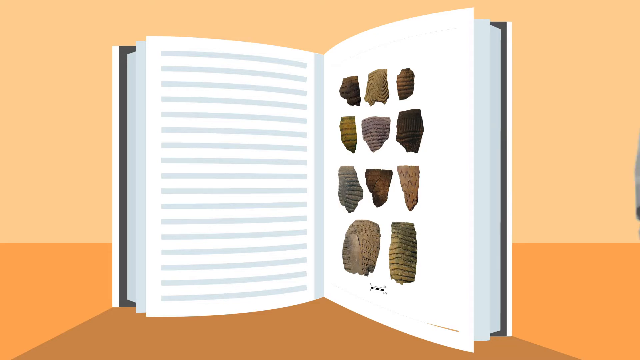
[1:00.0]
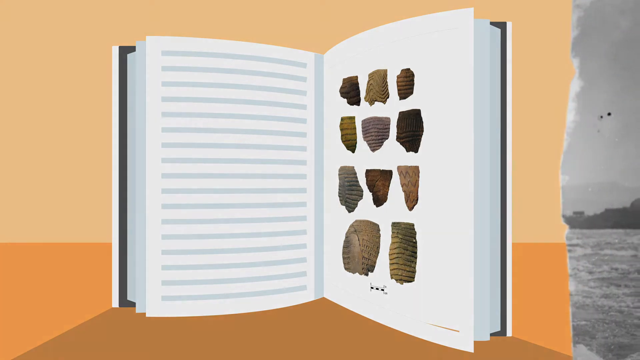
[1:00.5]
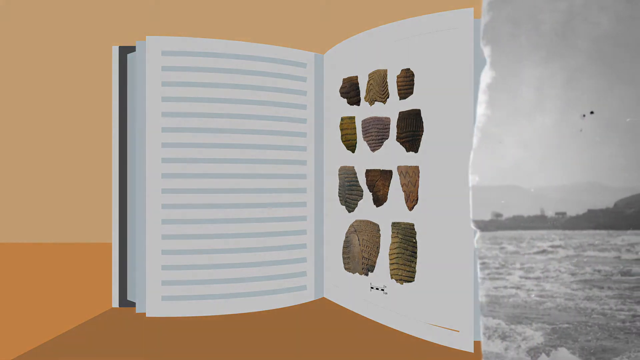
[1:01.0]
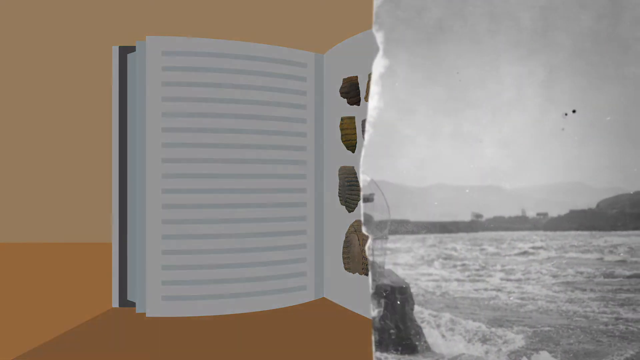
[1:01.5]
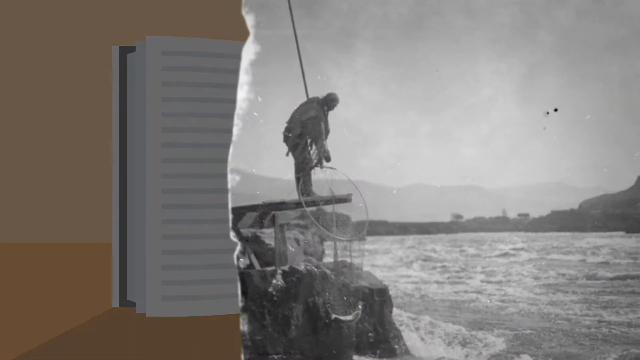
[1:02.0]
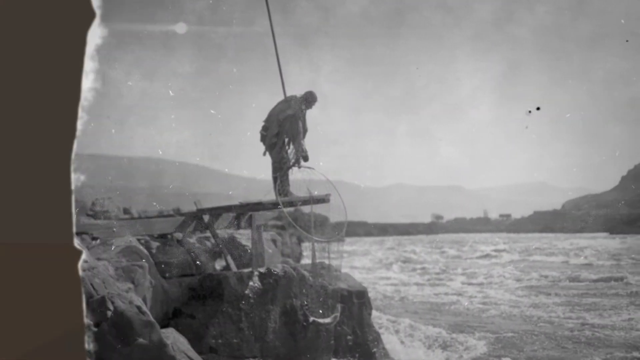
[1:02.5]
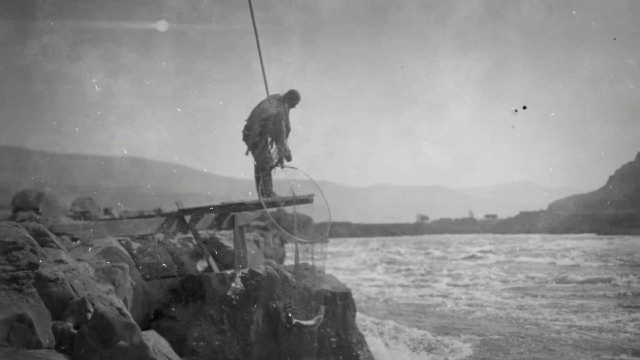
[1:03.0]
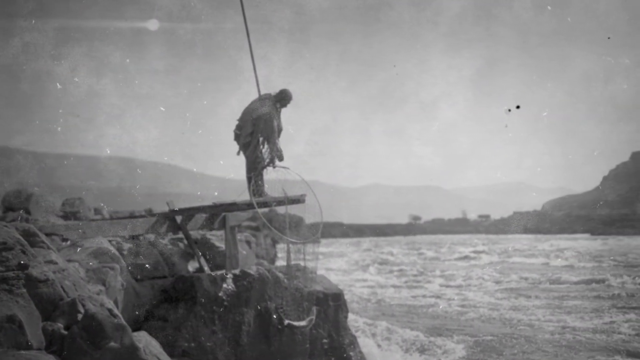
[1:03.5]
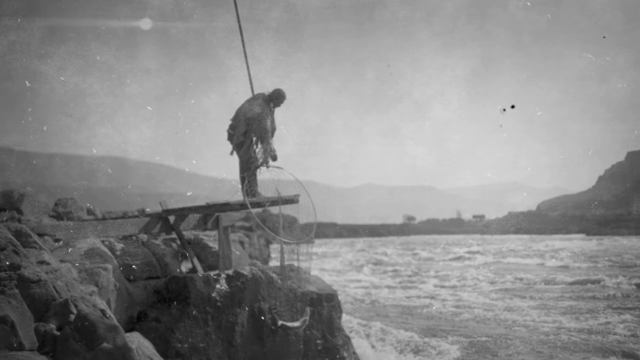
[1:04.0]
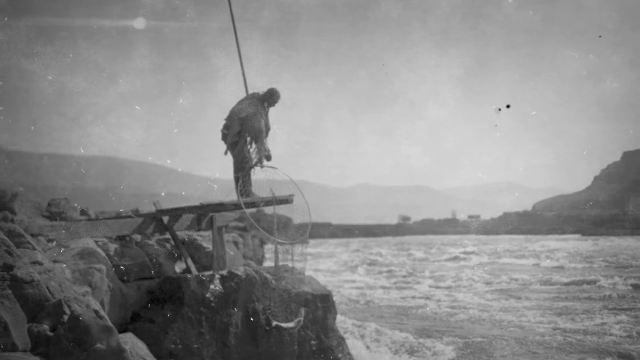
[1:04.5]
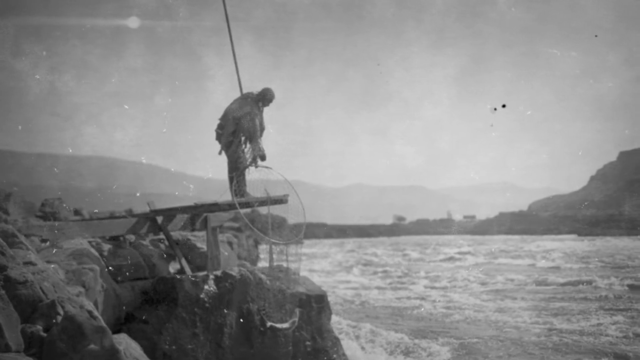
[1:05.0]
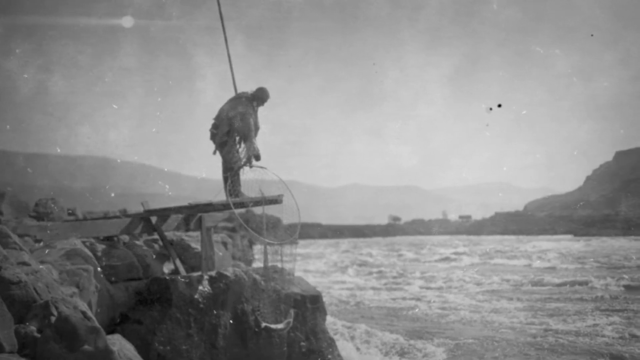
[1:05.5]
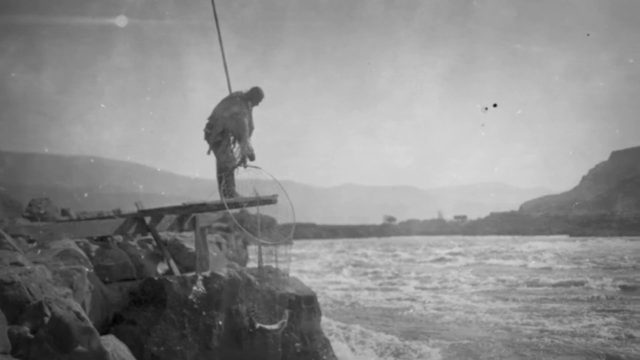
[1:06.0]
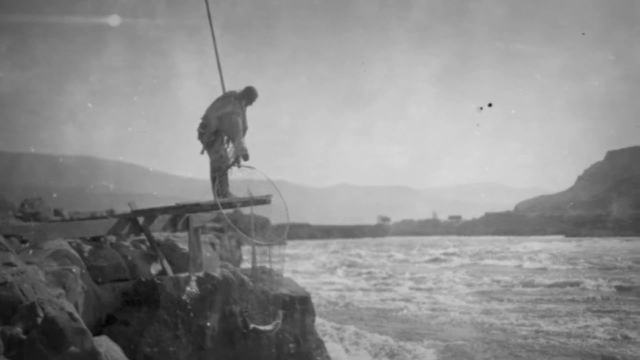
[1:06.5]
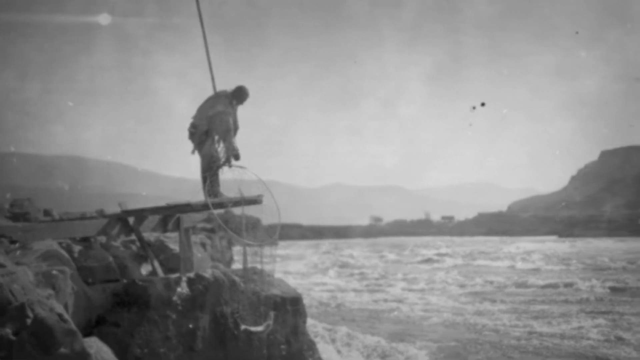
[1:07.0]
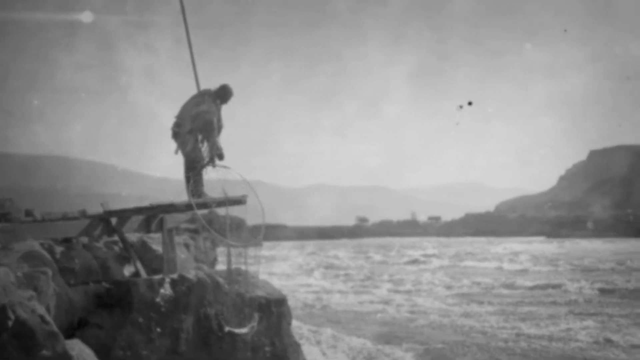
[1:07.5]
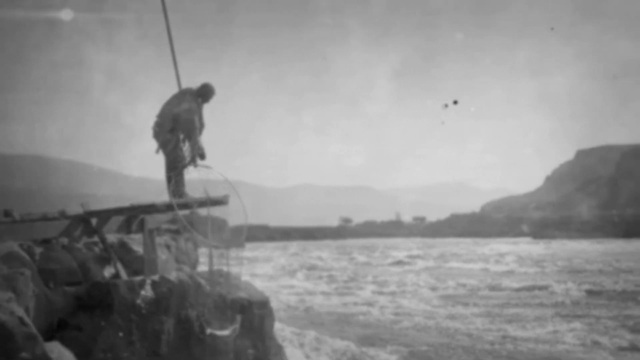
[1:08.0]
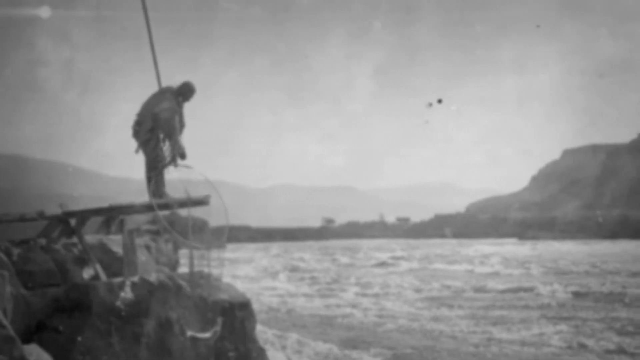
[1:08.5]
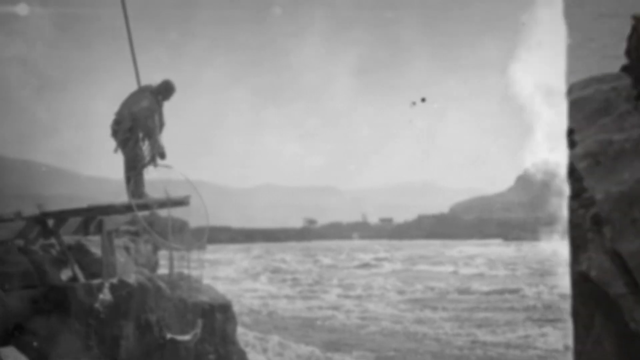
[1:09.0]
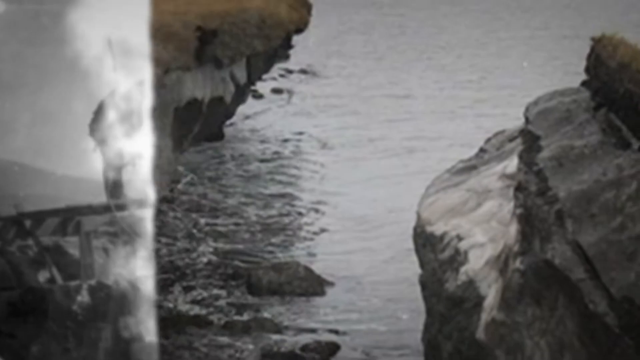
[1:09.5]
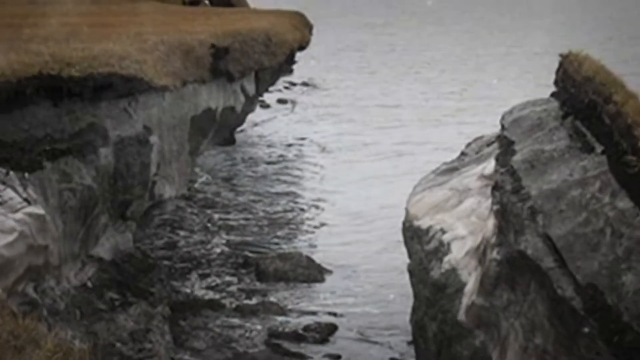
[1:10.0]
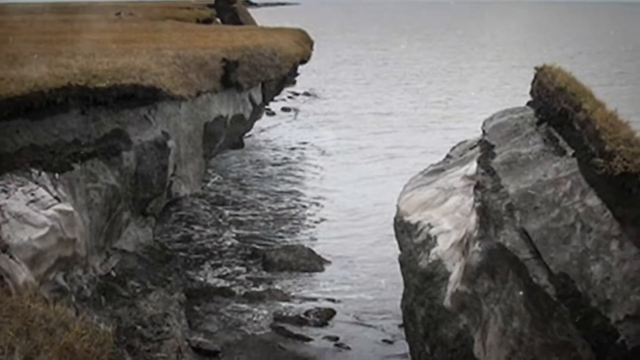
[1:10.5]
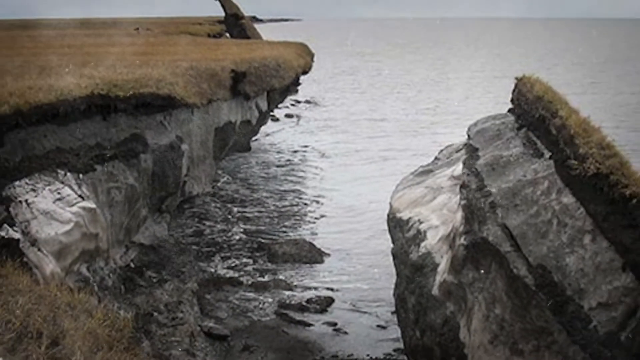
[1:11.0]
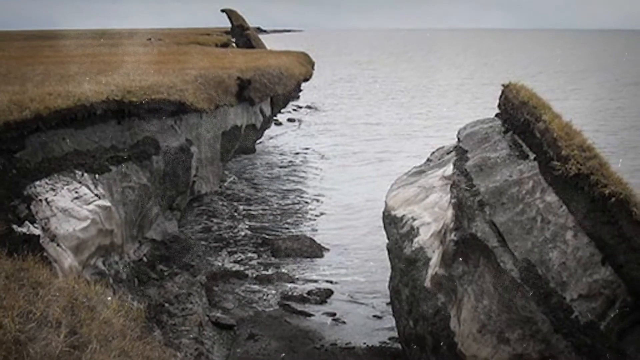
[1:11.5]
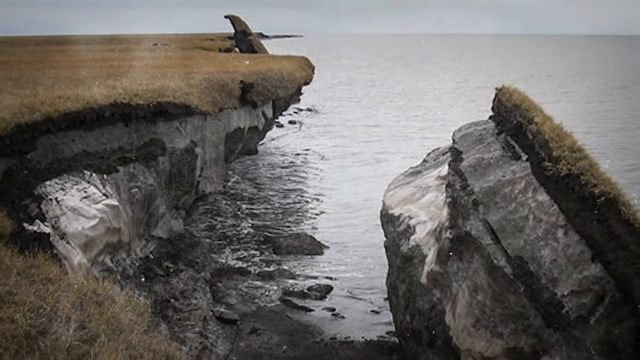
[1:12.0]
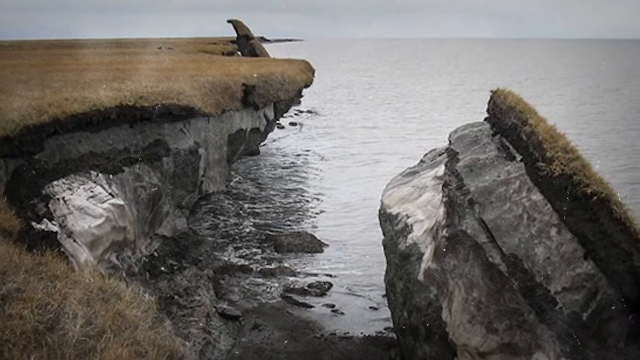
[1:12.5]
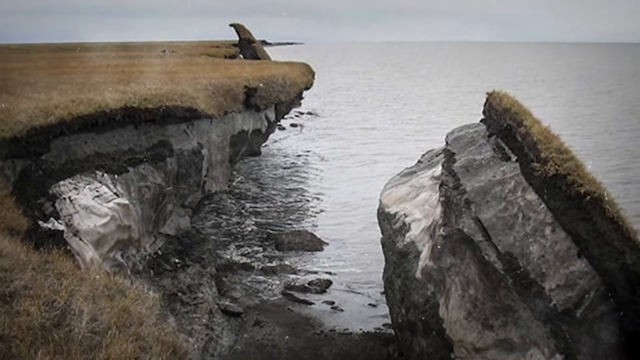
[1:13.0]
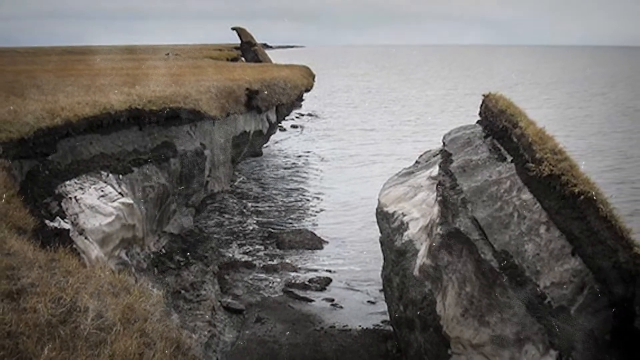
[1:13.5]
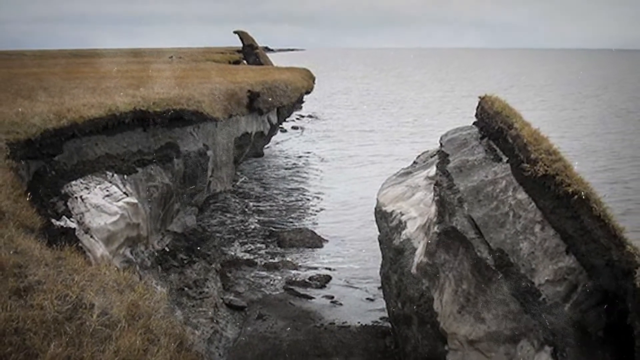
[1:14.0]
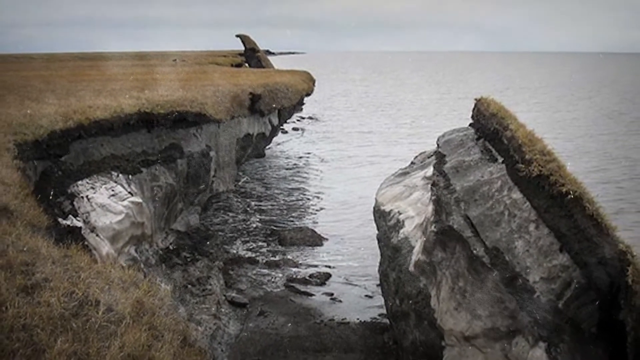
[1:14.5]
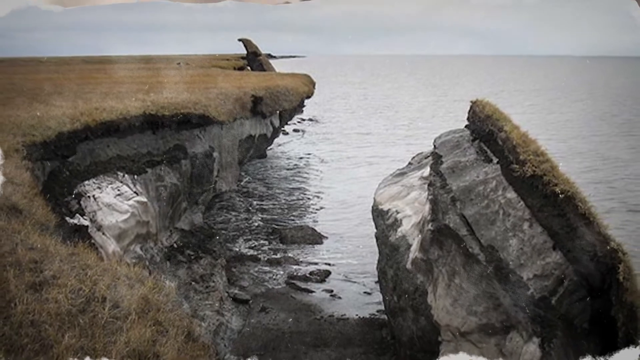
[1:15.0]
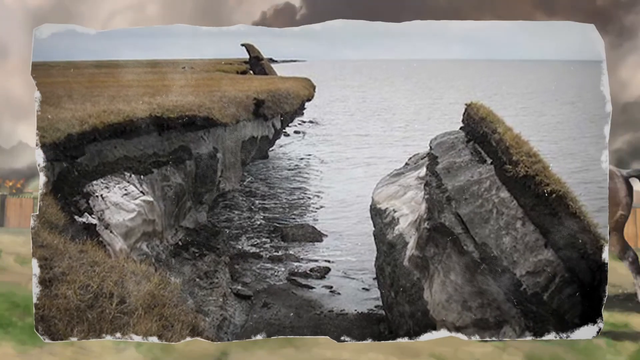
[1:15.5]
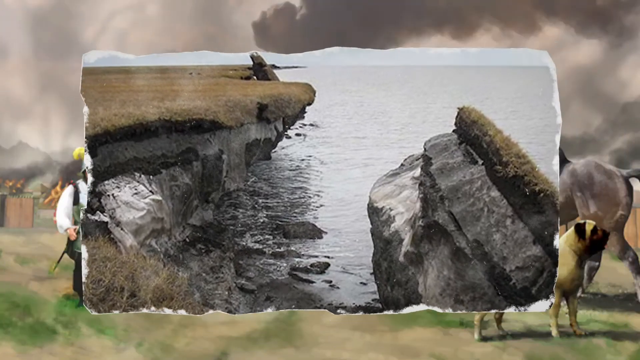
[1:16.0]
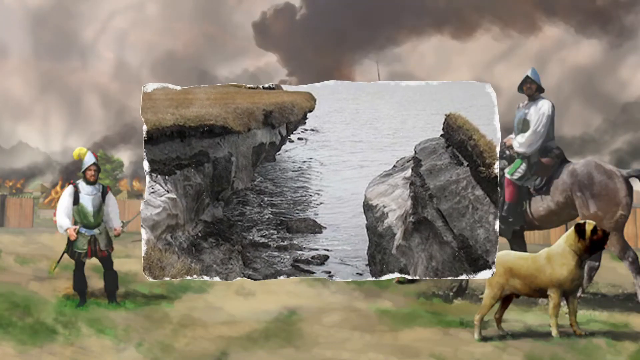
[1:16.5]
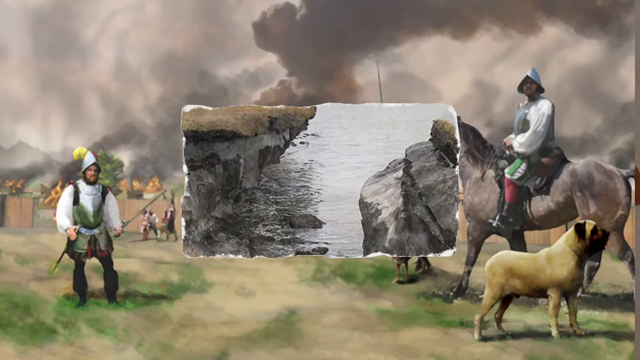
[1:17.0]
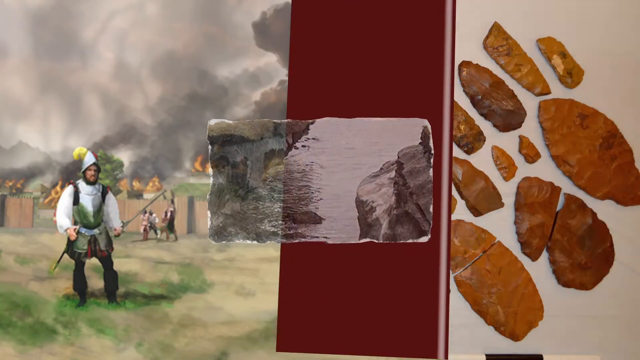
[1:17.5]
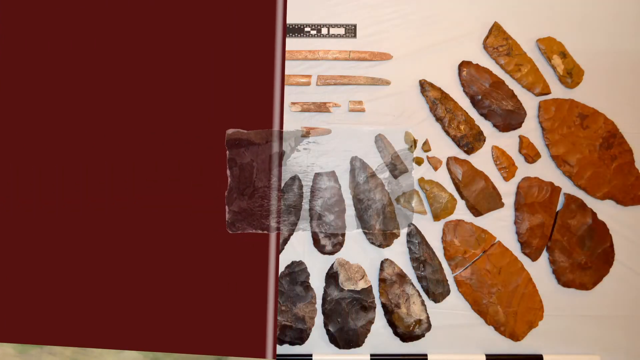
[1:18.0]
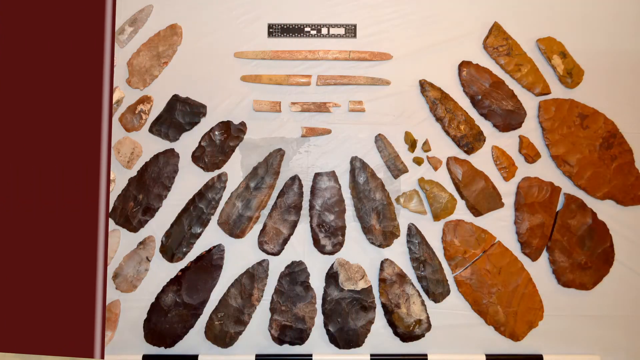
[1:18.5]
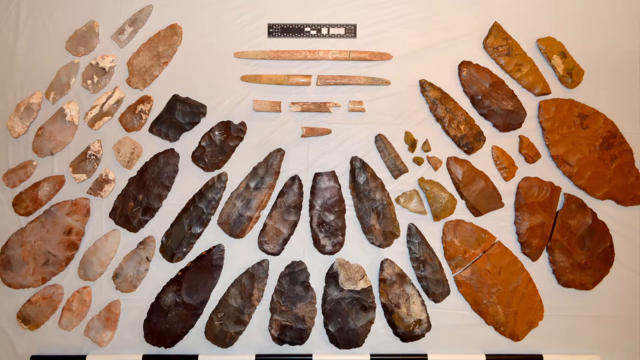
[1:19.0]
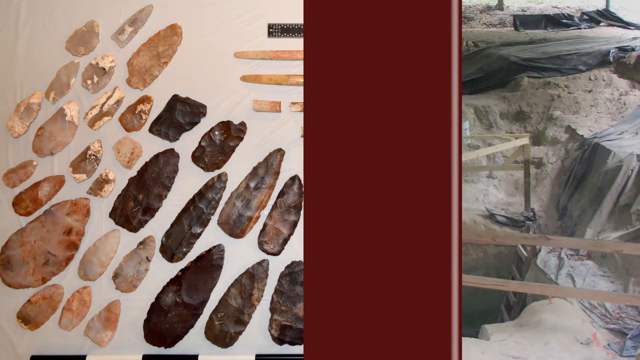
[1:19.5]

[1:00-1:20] A drawing of an opened book appears, with little detail: white pages with sort of gray lines indicating print. The right-hand page contains images of what appear to be flint or slate pieces, possibly the remnants of arrowheads, though their somewhat degraded shape makes this hard to tell. A right-to-left swipe reveals what appears to be a photograph of a fisherman using a net almost as large as he is, standing on a platform over roiling waters; the photograph looks old and vintage. The camera pans over the water to the right of the man, and another swipe shows two cliffs with incoming tide on the rocks about 40 feet below and between them. The image then changes to arrowheads and an archaeological dig.